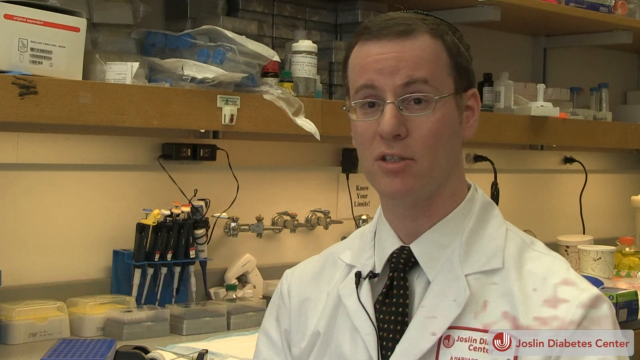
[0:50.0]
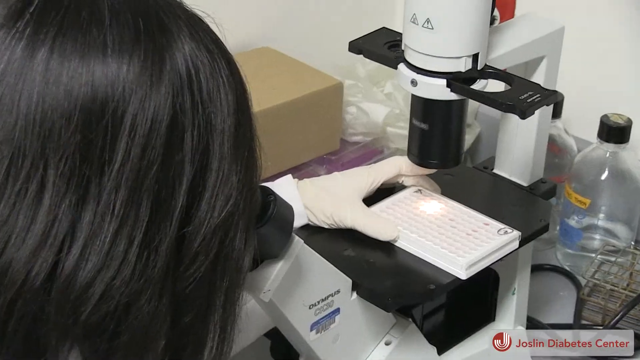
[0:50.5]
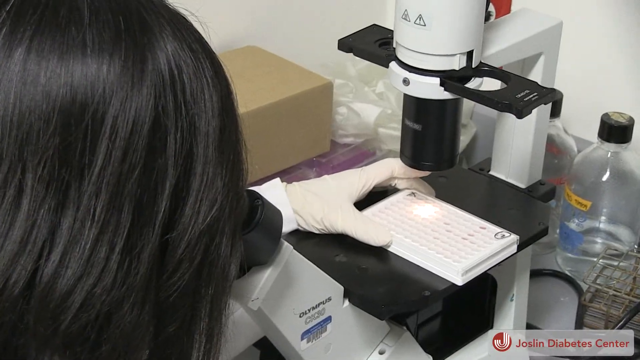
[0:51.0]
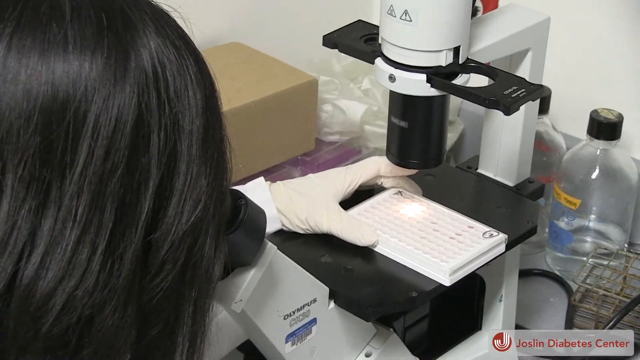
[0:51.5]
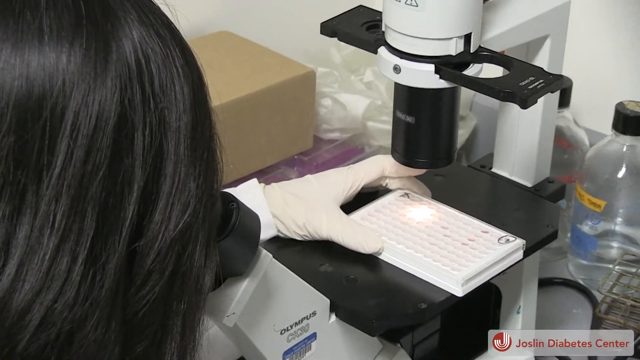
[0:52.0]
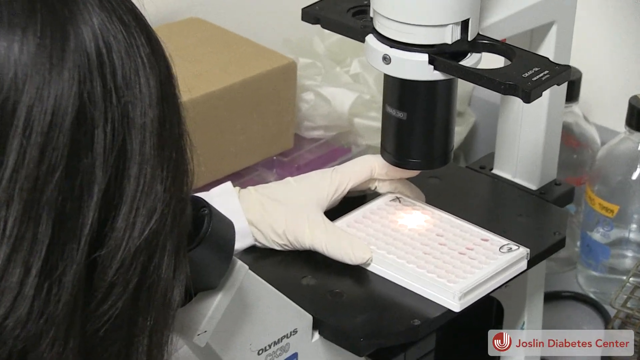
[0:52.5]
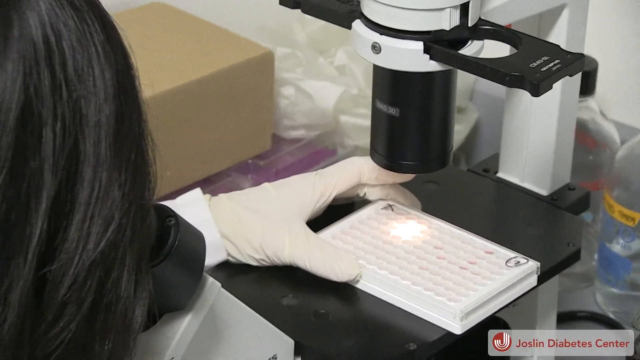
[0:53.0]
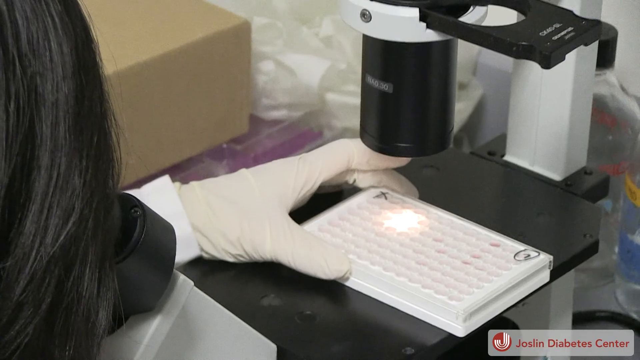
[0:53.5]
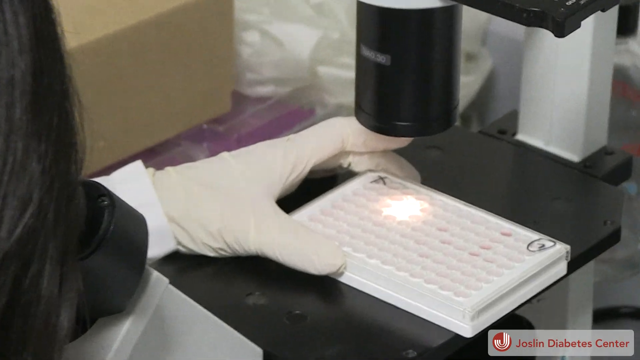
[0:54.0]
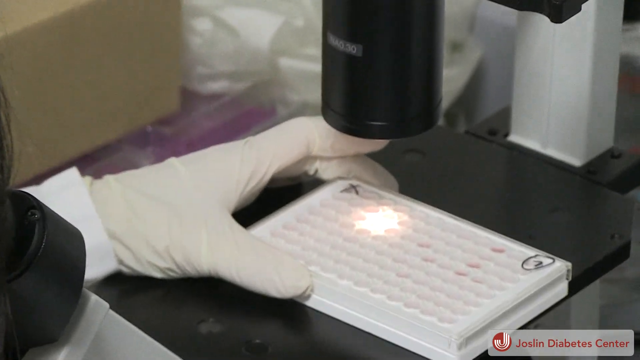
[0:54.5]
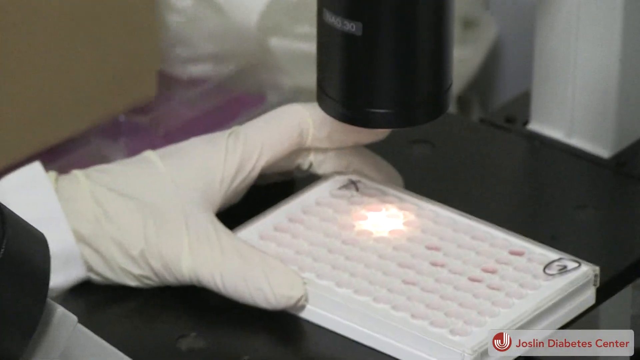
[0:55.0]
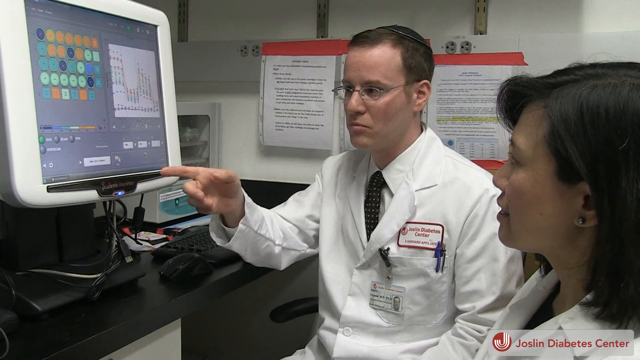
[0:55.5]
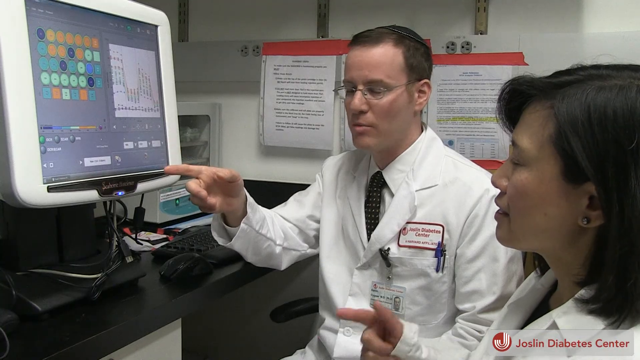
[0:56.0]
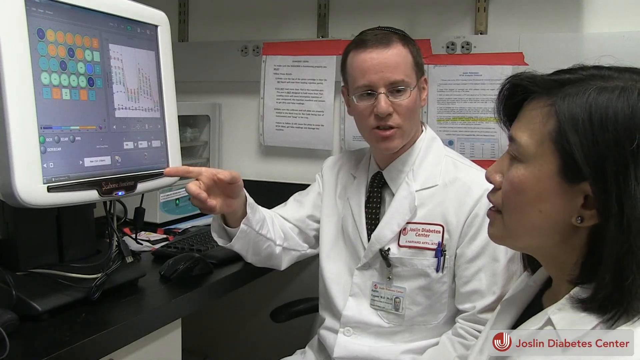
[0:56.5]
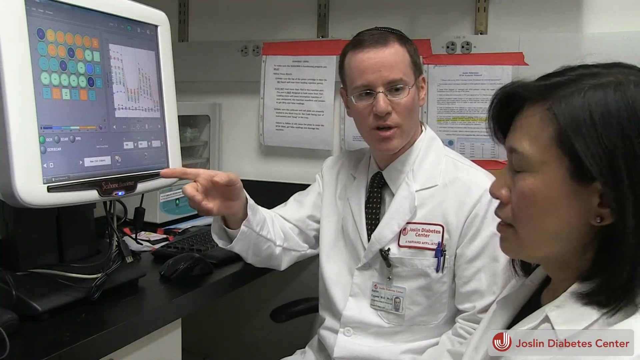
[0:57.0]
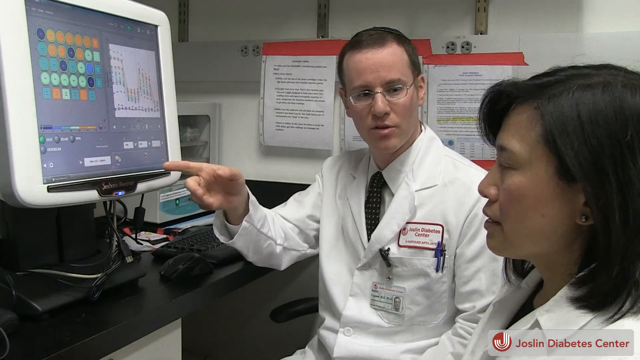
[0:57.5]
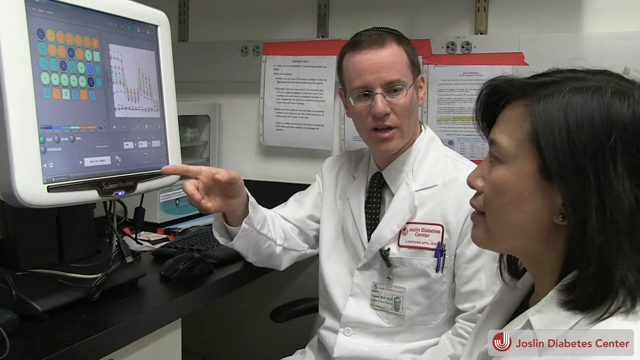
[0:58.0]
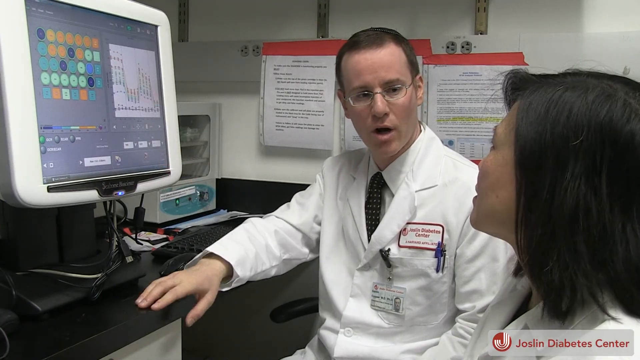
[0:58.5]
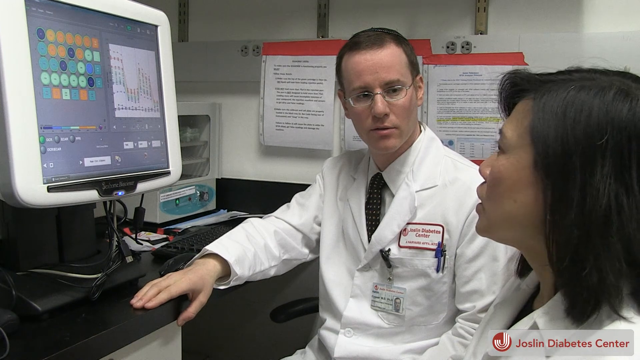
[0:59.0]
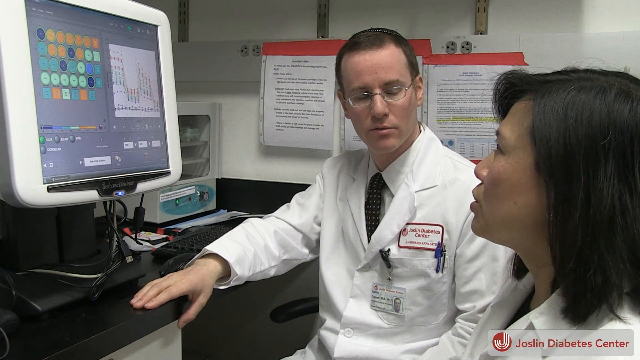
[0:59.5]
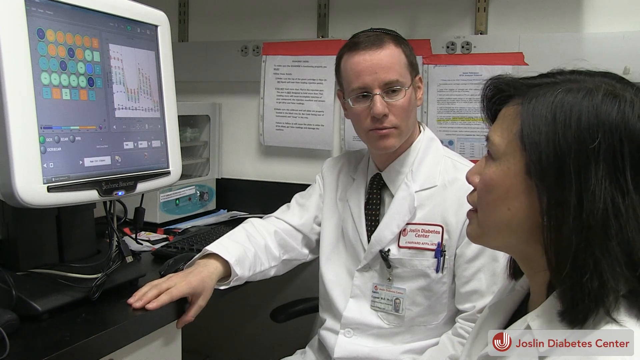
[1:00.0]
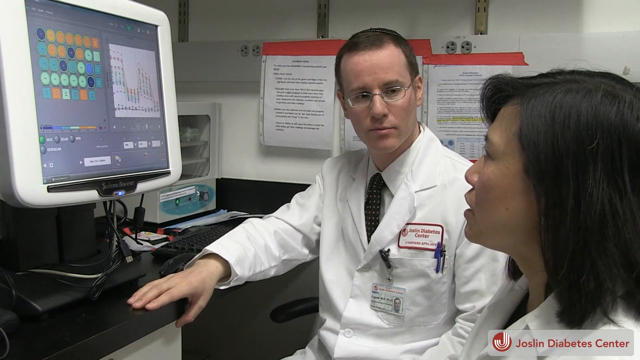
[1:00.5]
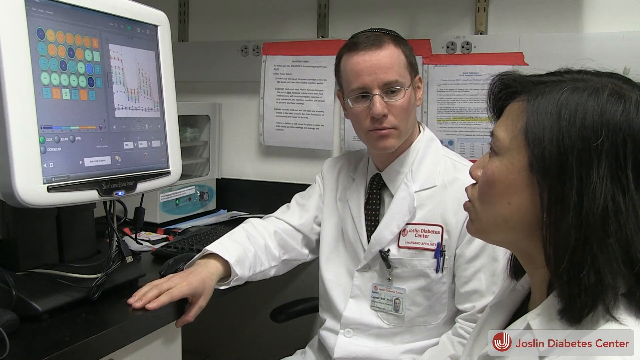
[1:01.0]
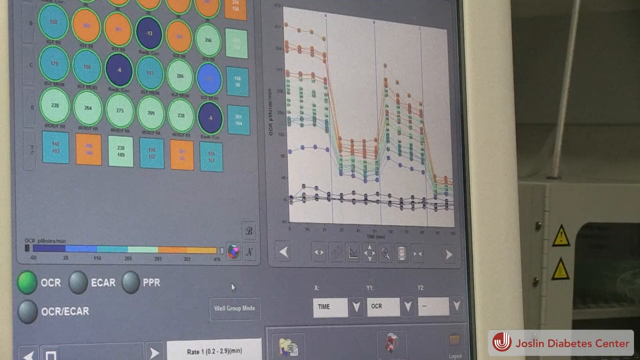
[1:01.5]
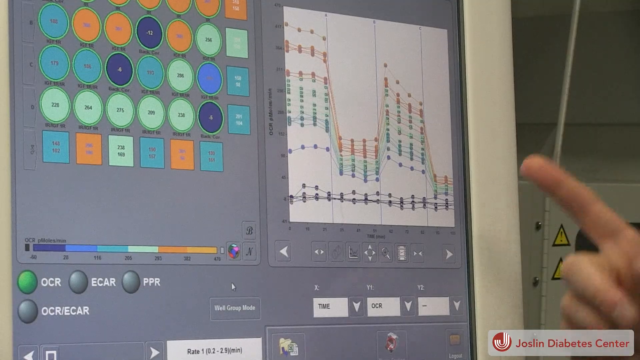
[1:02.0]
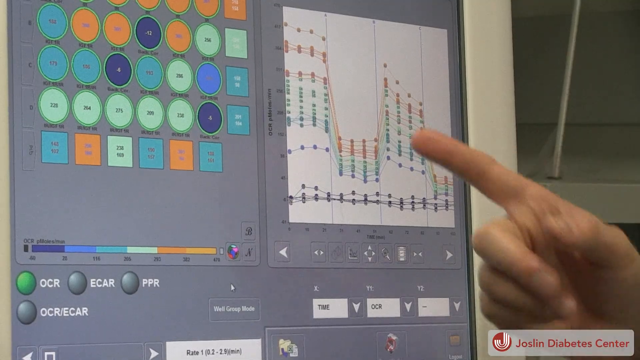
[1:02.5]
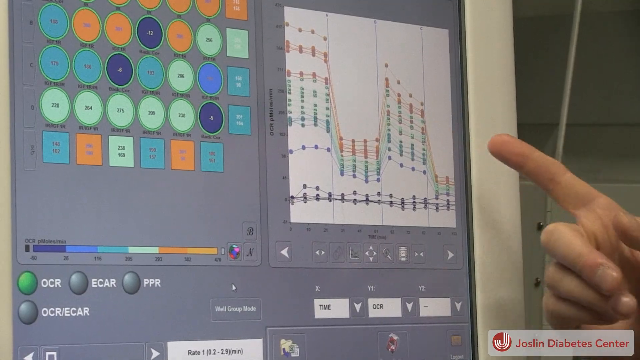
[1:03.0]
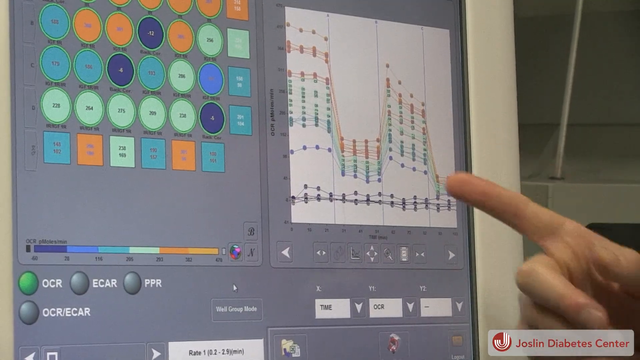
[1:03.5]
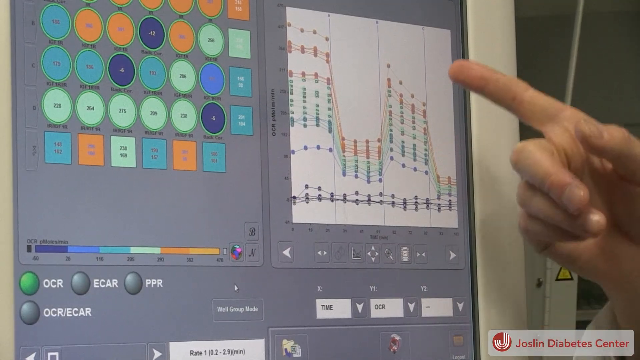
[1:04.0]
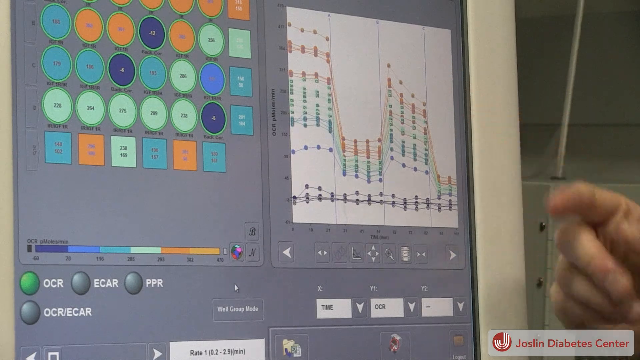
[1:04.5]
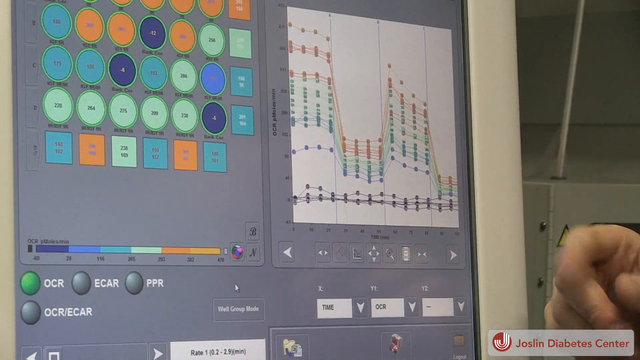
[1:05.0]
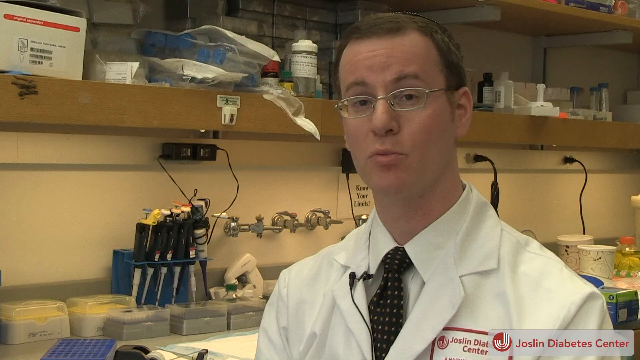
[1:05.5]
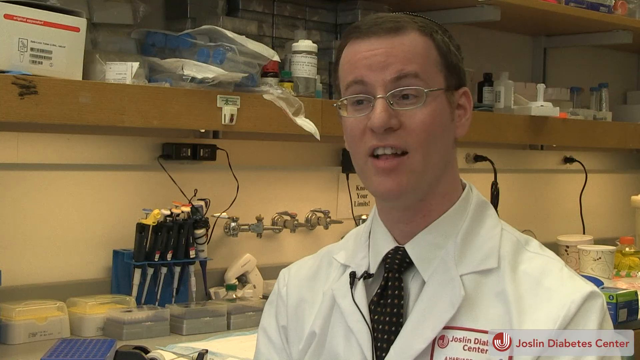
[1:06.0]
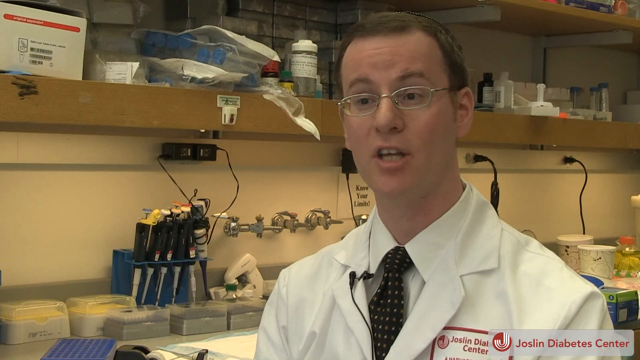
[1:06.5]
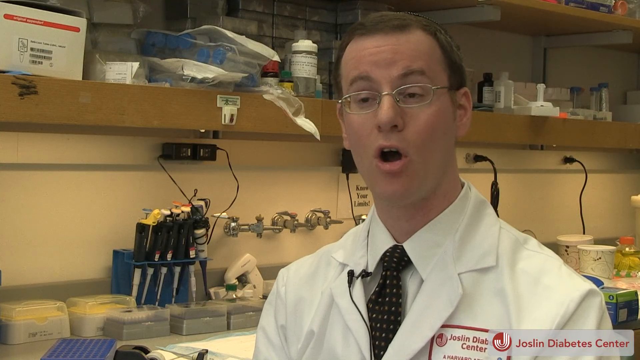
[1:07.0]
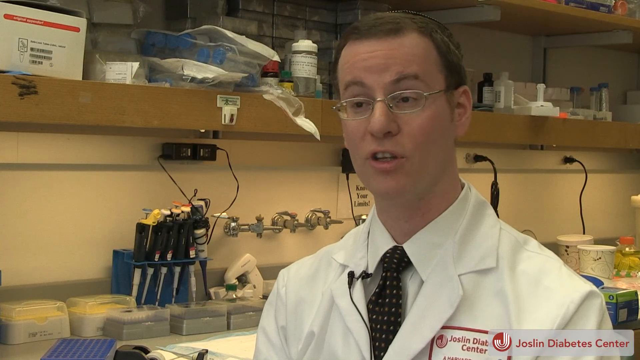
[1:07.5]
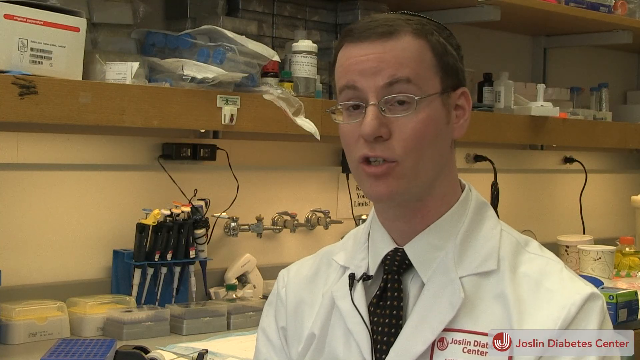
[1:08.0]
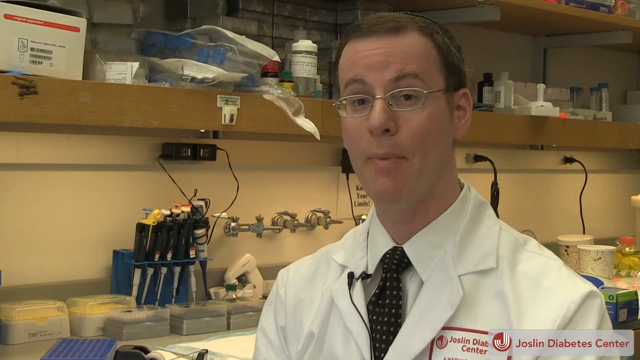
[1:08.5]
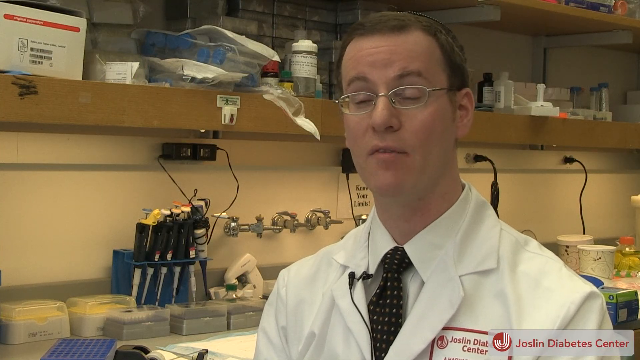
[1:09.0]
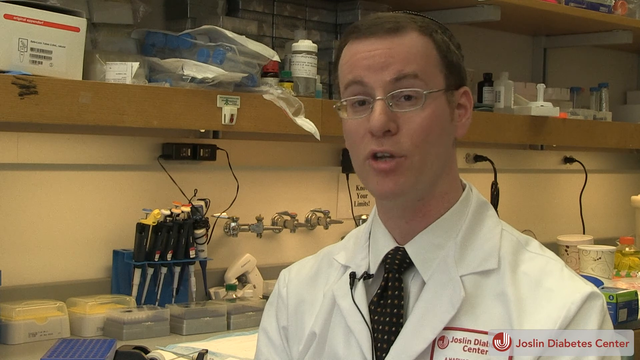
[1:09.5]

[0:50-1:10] A scientist in a white lab coat and white gloves looks at some materials in a specimen dish under a microscope, holding the dish in her left hand, while light from the microscope shines onto a particular section of it. Next, the two co-authors sit in front of a computer screen, looking at the results of their experiments together. They discuss the findings; the man seems to be explaining his ideas or conclusions to the woman, and the woman then also speaks. The camera zooms in on the computer screen showing the results: many circles and squares in different colours fill the left half of the screen, and a graph is on the right half. One of the scientists points at a section of the graph with a pointer finger.